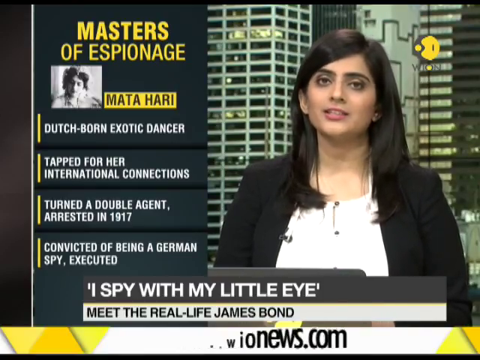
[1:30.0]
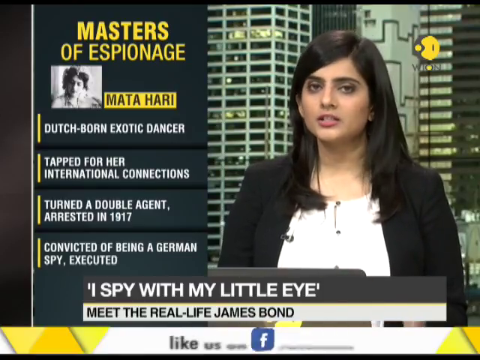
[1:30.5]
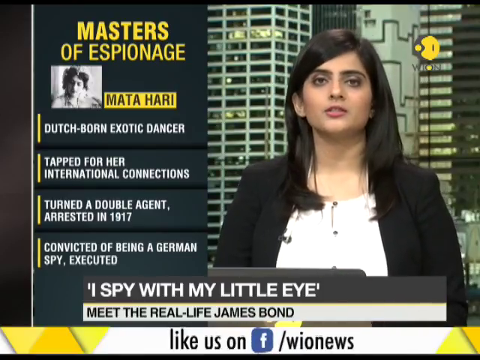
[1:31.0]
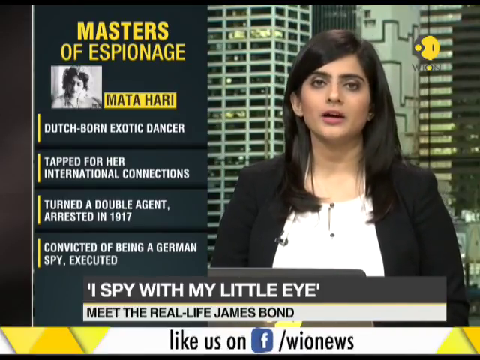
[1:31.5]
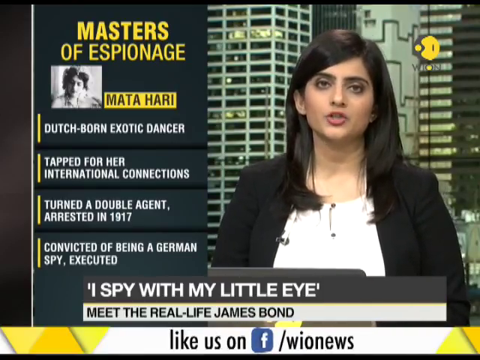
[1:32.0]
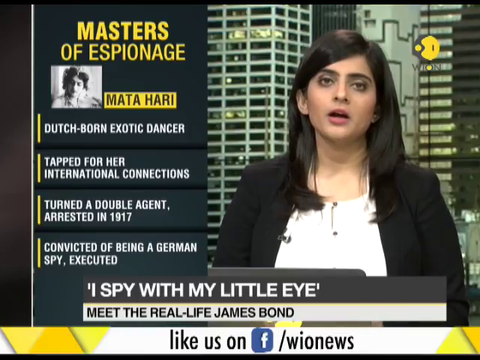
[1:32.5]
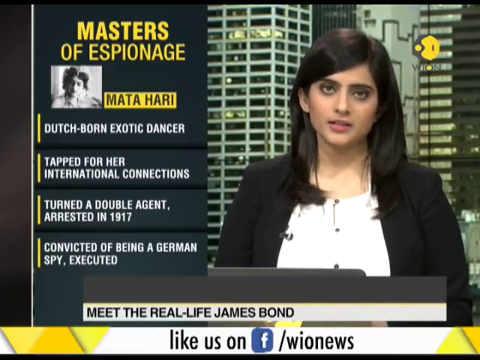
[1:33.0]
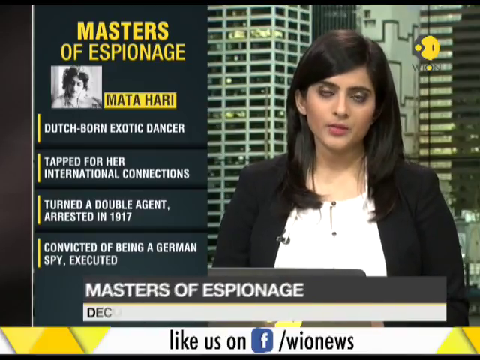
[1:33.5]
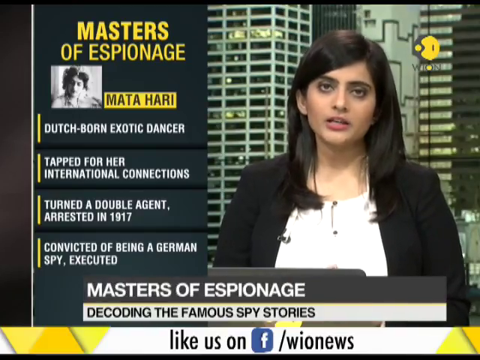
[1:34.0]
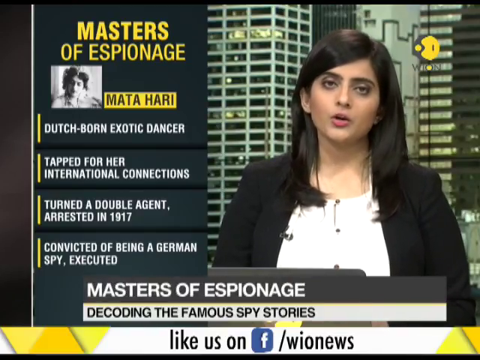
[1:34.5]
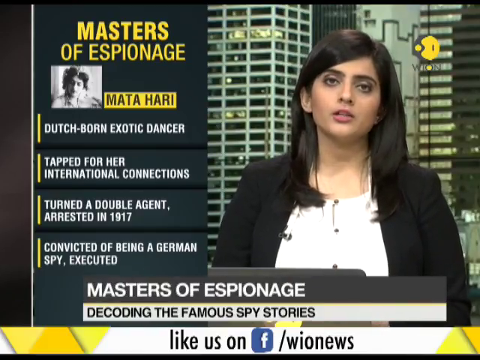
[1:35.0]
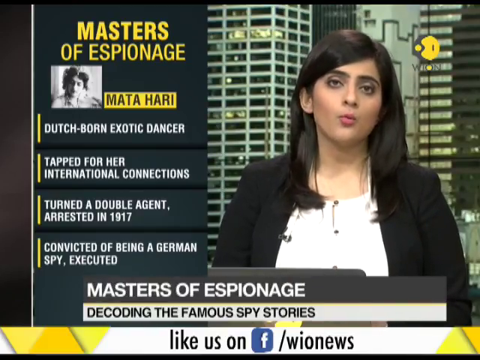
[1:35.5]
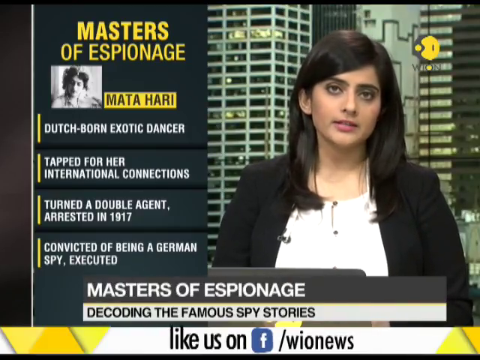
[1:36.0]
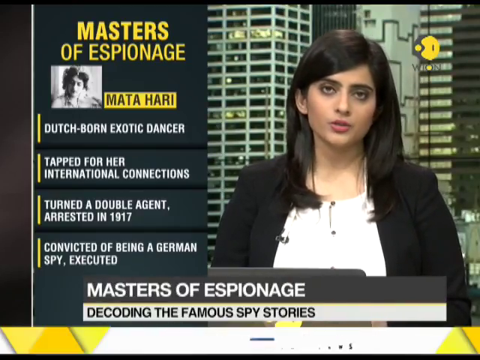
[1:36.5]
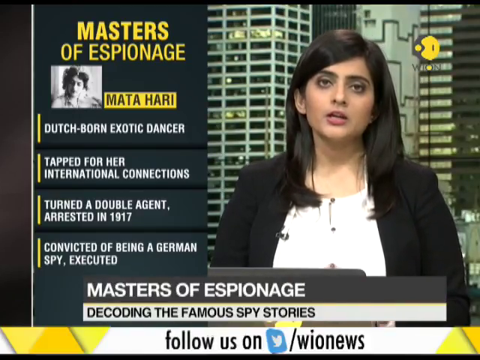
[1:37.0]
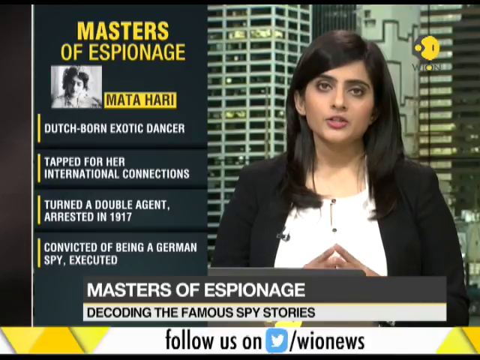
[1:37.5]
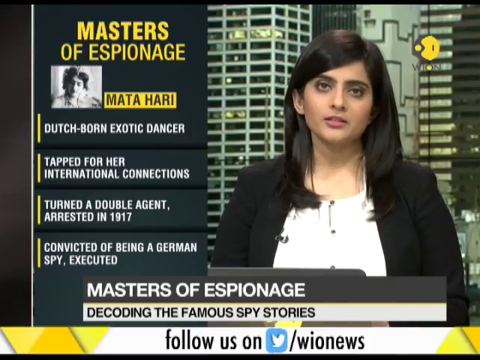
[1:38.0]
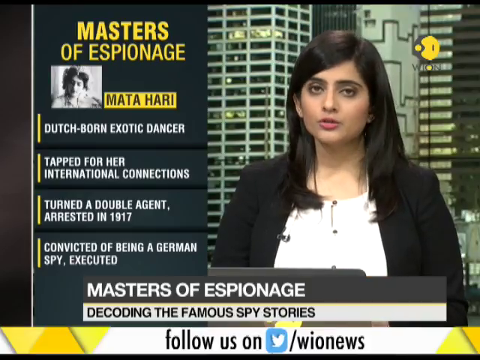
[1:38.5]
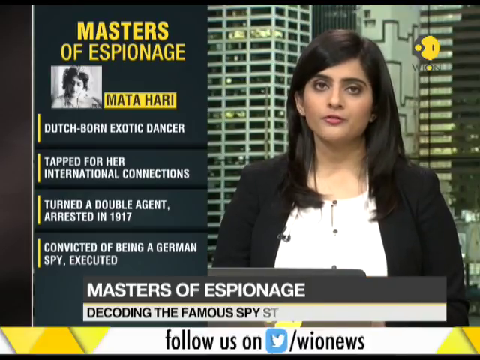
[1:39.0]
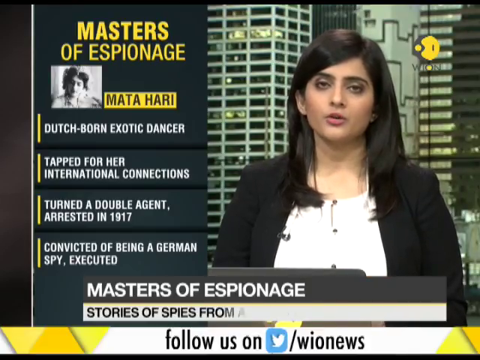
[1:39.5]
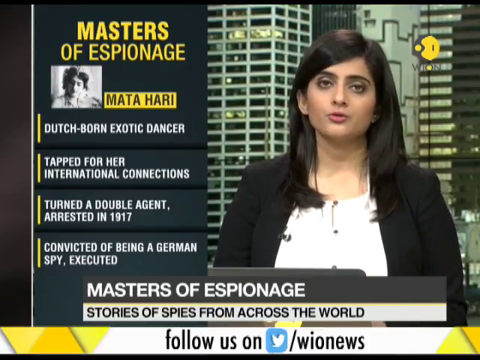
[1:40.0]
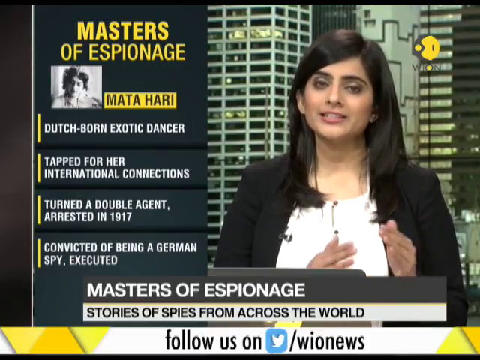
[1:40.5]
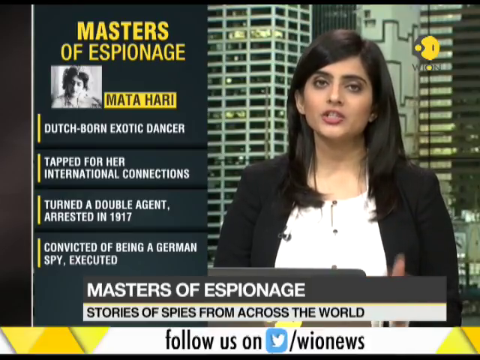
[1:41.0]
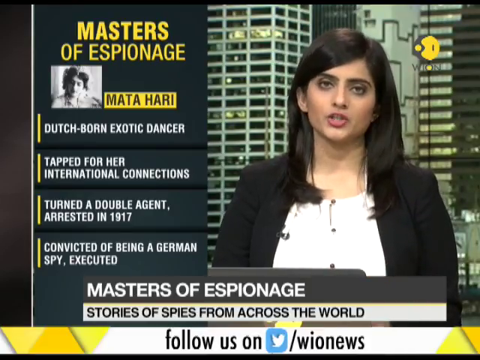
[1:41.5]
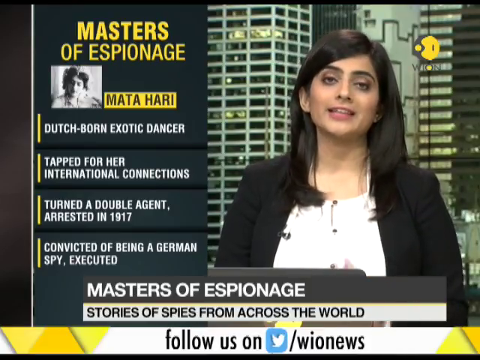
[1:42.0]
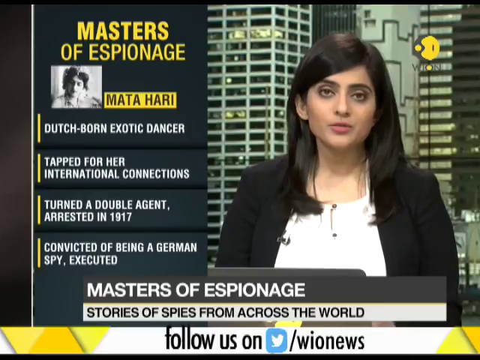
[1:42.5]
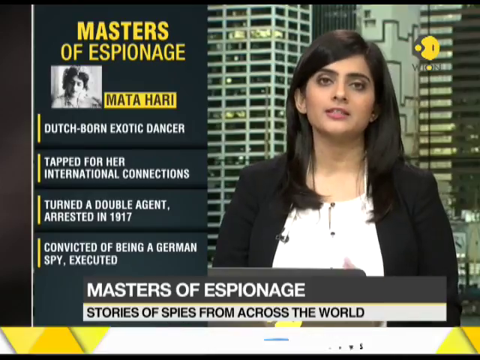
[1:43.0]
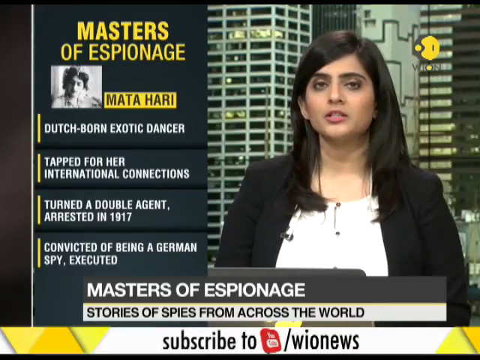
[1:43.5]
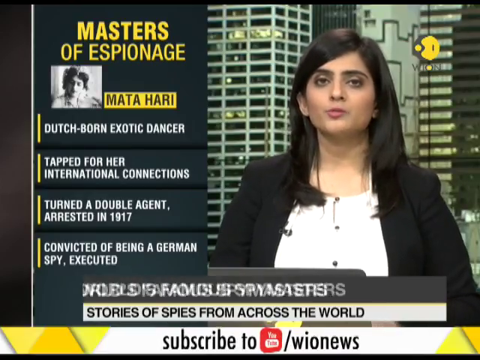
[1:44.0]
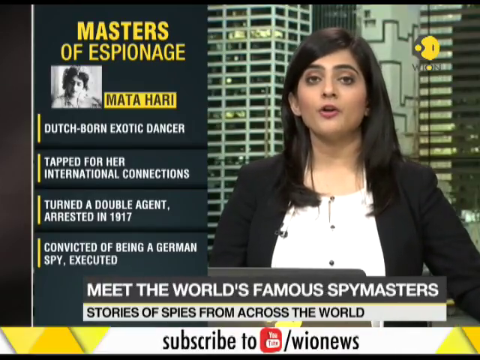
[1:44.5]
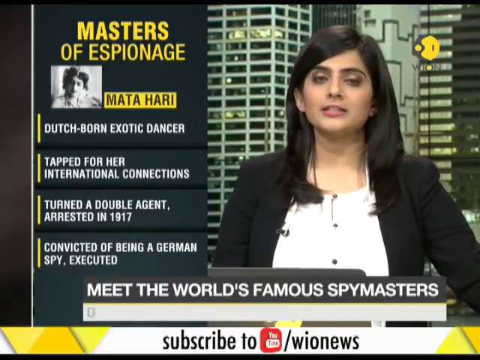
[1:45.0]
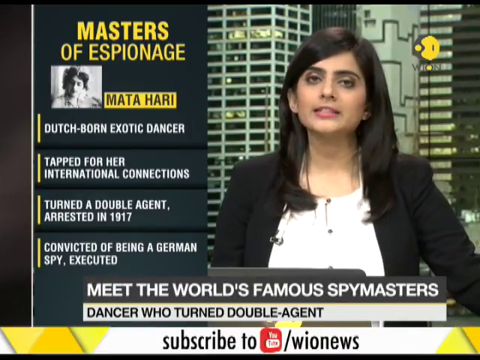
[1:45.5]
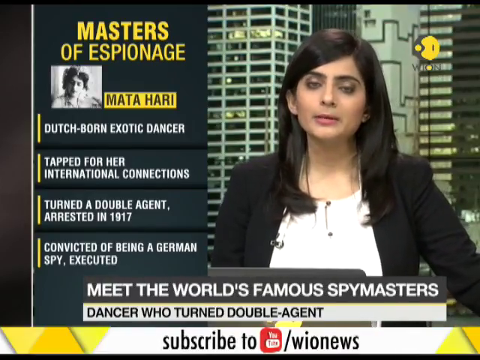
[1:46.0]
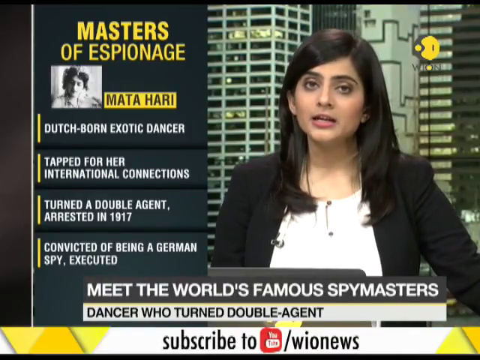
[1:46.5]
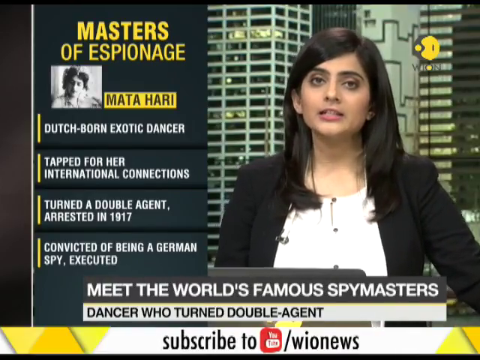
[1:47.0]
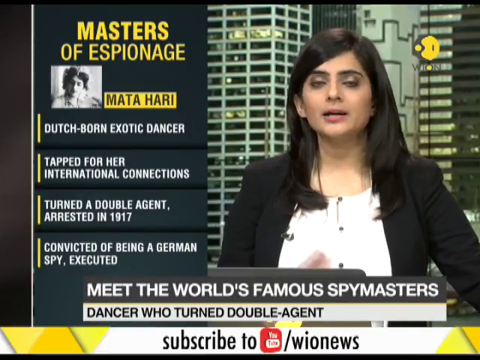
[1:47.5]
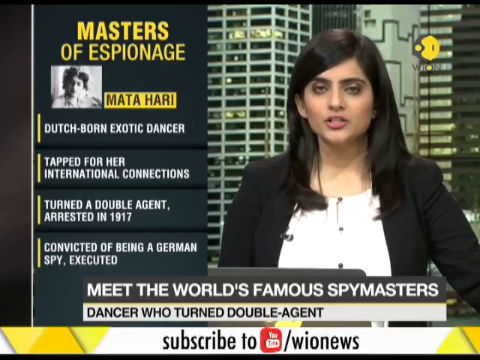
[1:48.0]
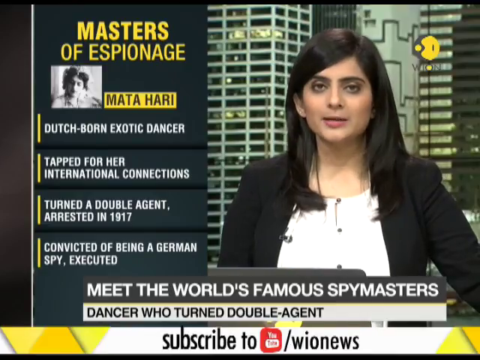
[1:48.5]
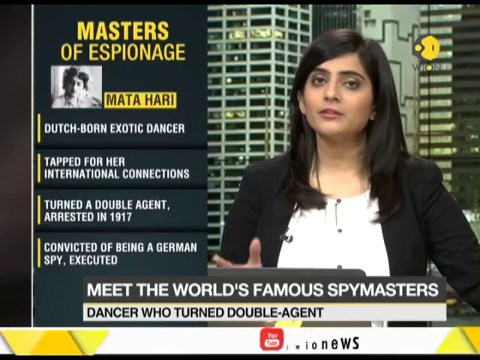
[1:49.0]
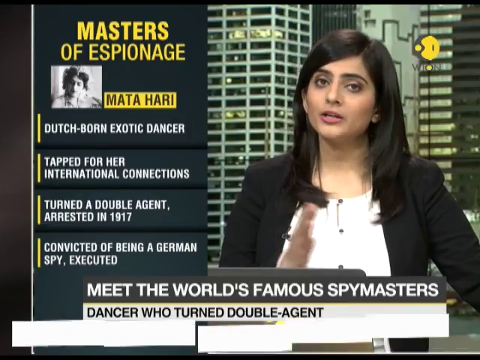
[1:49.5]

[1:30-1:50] A woman with dark hair in a black jacket and white top, with a microphone clipped to her jacket, talks into the camera in front of a large city view. A label at the bottom reads "I spy with my little eye" with "Meet the real-life James Bond" below it. A section on screen reads "Masters of espionage," with a black and white photograph of a woman labeled "Mata Hari" beside it and facts listed below. The bottom label changes to "Decoding the famous spy stories" and then to "Stories of spies from across the world."